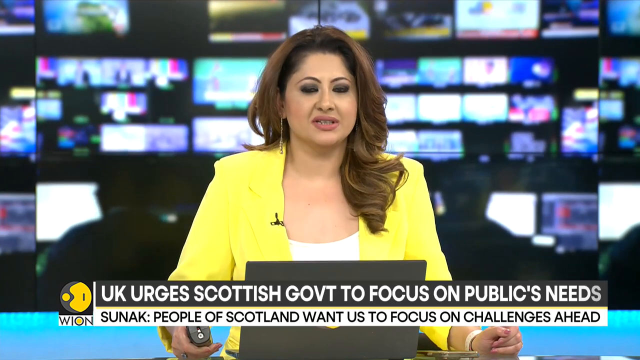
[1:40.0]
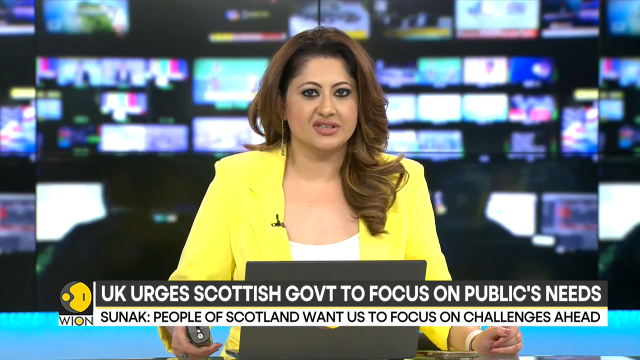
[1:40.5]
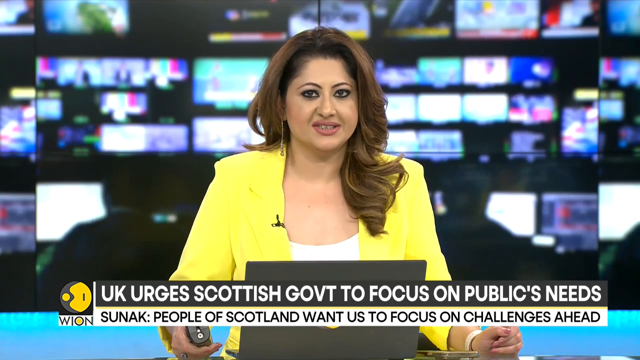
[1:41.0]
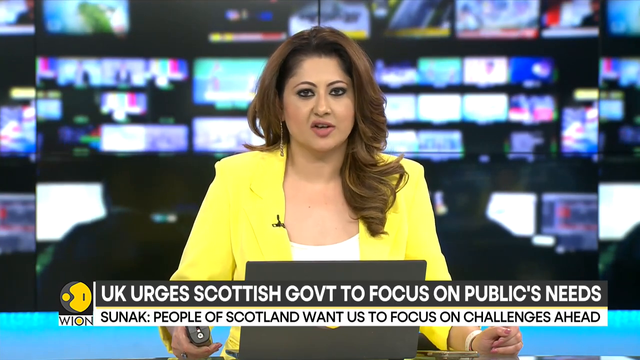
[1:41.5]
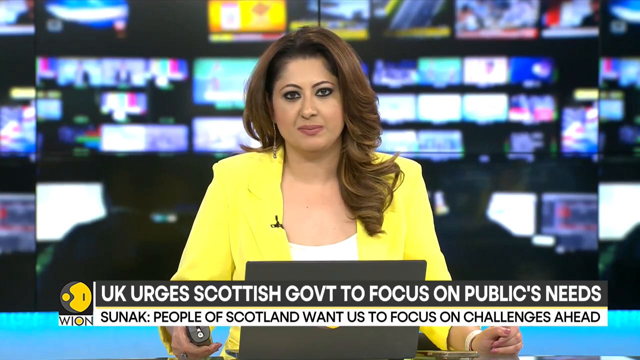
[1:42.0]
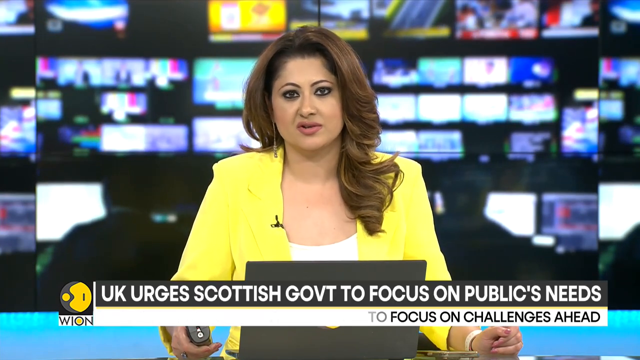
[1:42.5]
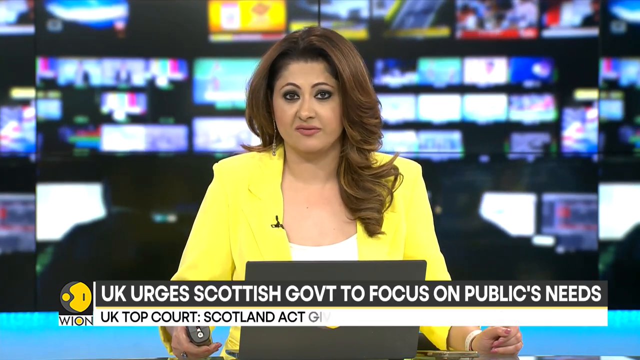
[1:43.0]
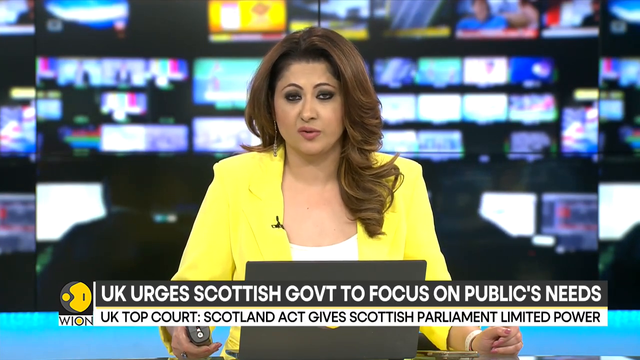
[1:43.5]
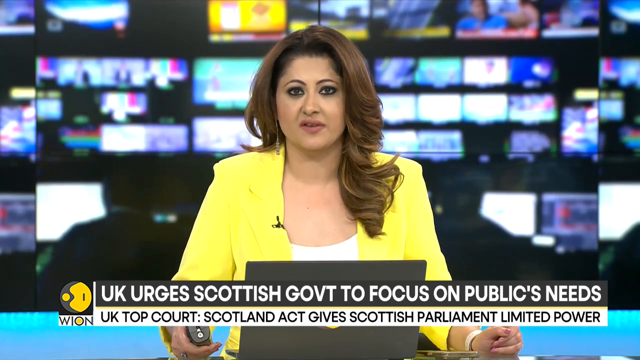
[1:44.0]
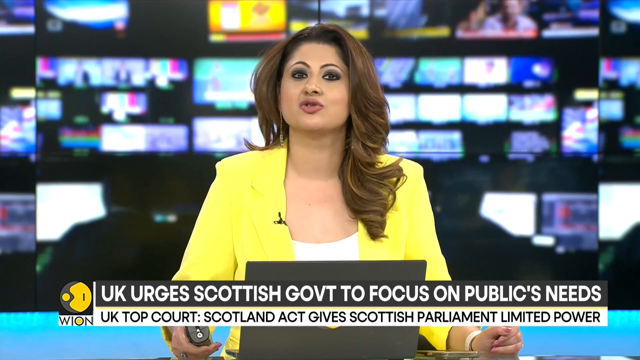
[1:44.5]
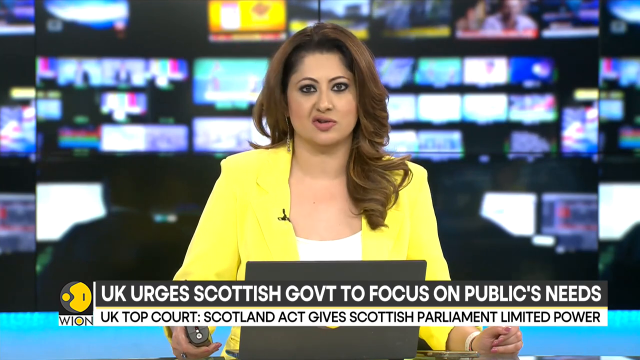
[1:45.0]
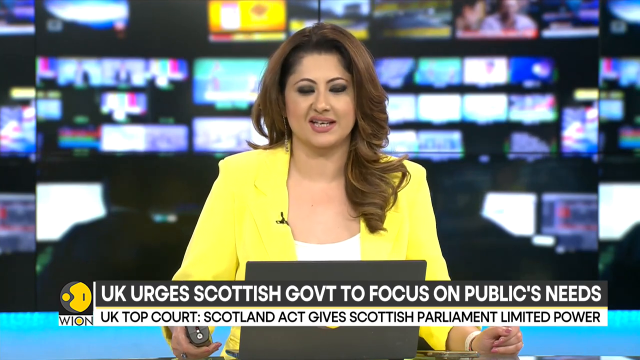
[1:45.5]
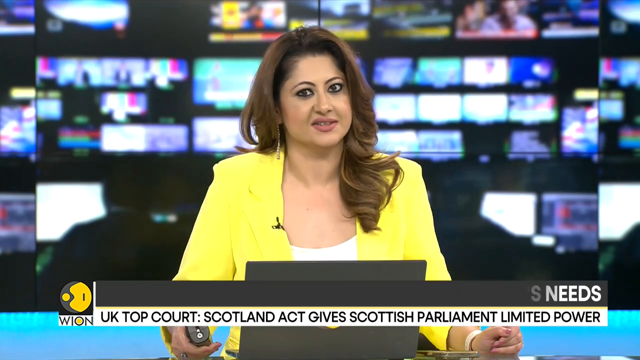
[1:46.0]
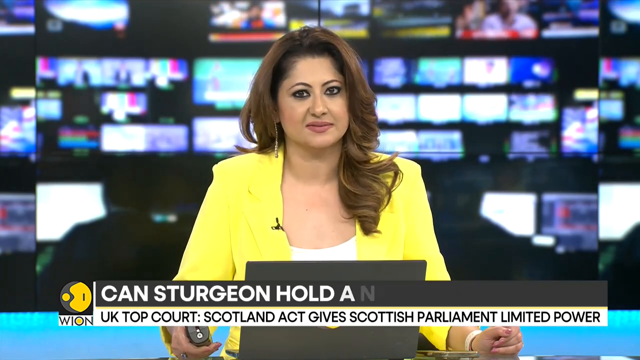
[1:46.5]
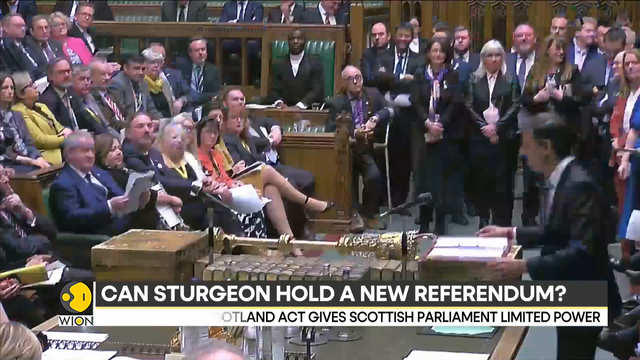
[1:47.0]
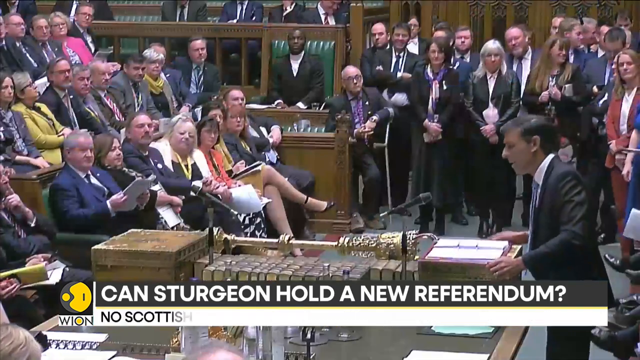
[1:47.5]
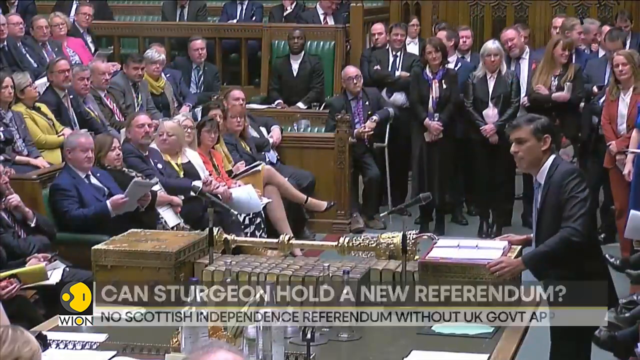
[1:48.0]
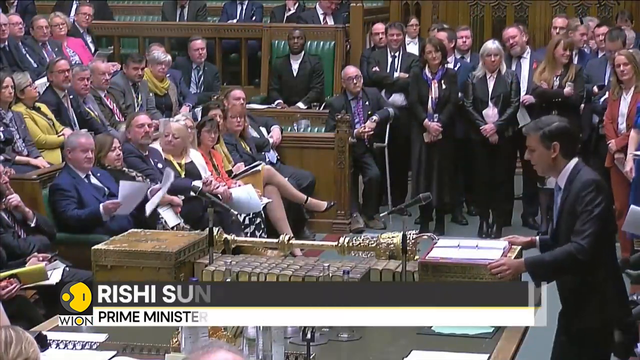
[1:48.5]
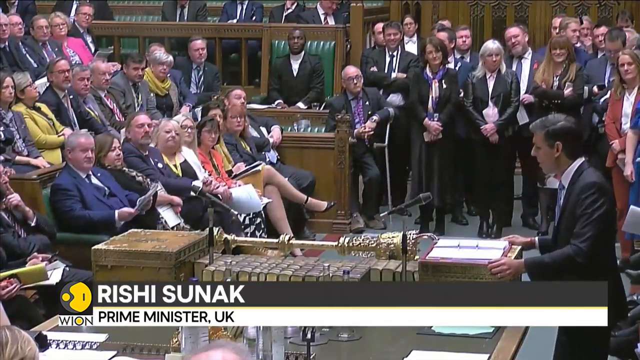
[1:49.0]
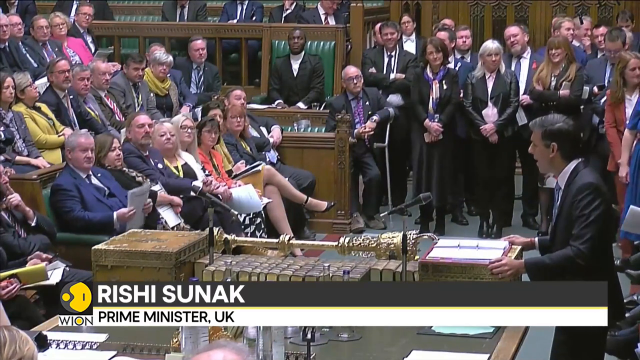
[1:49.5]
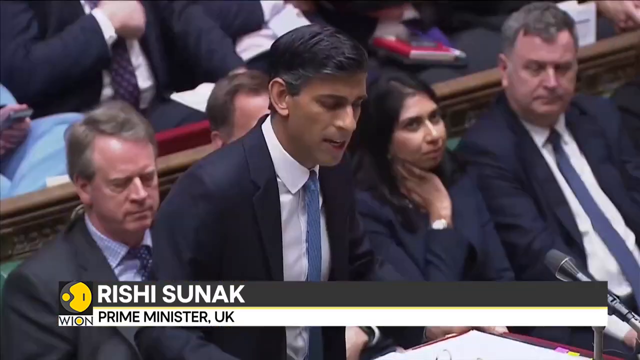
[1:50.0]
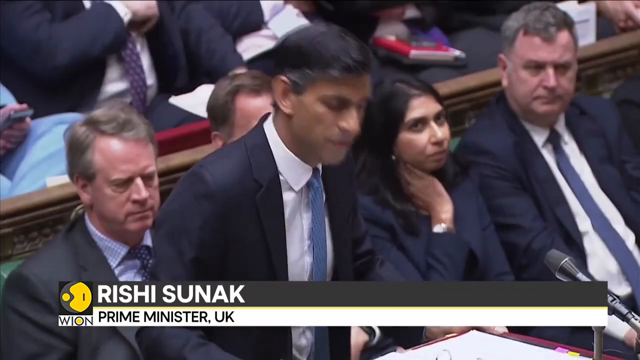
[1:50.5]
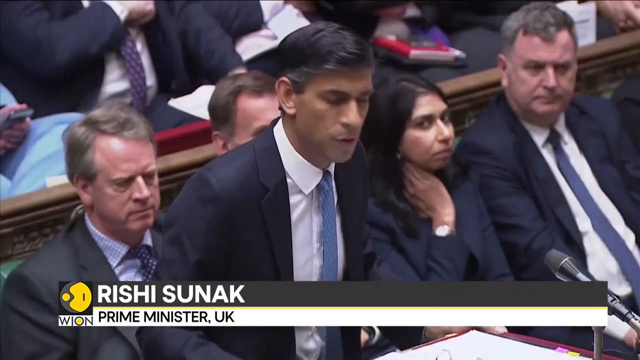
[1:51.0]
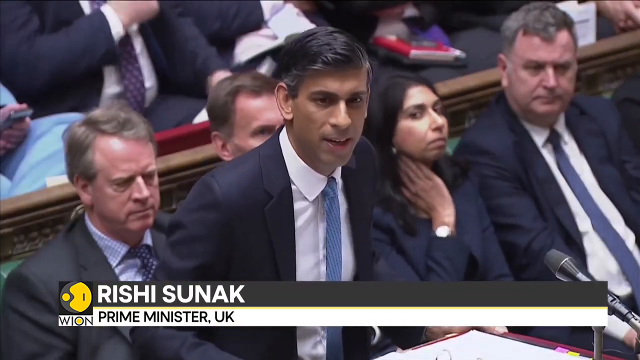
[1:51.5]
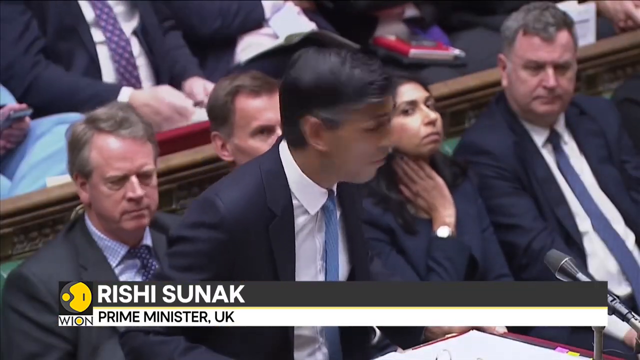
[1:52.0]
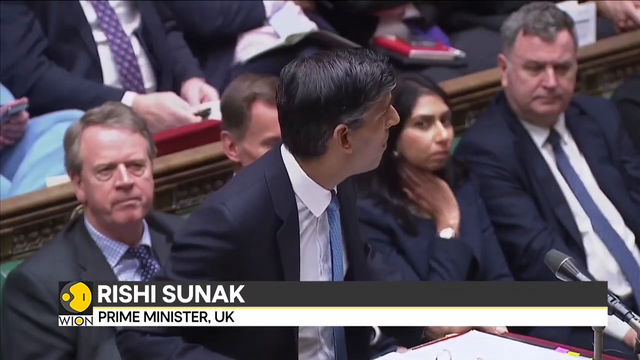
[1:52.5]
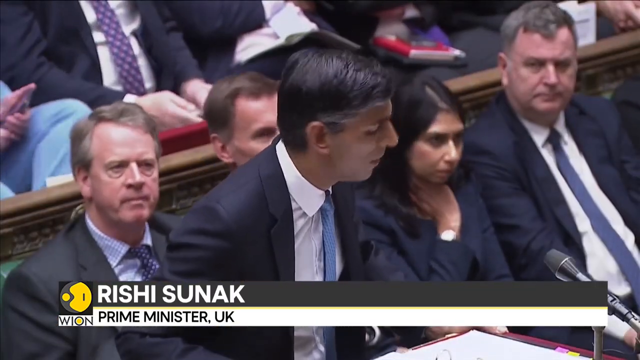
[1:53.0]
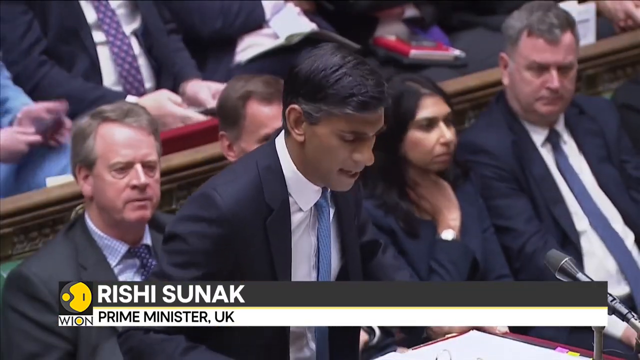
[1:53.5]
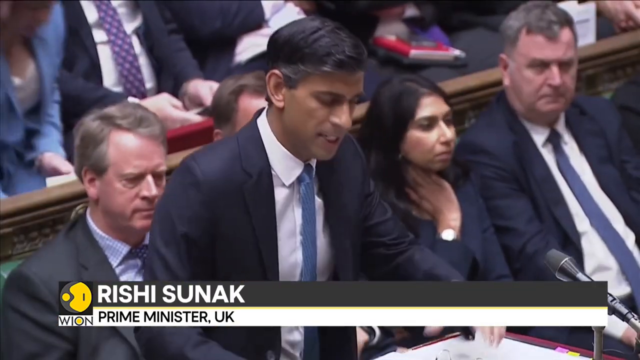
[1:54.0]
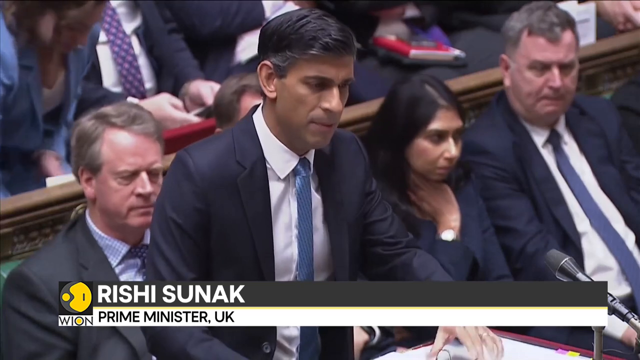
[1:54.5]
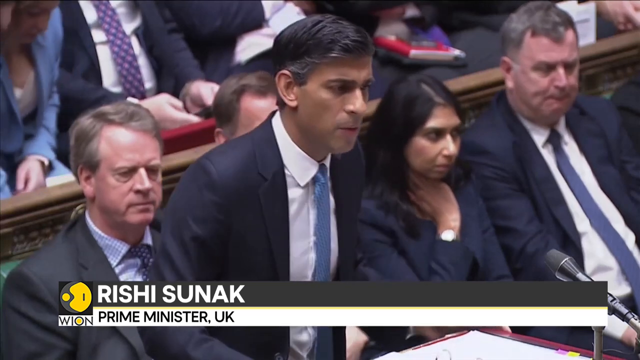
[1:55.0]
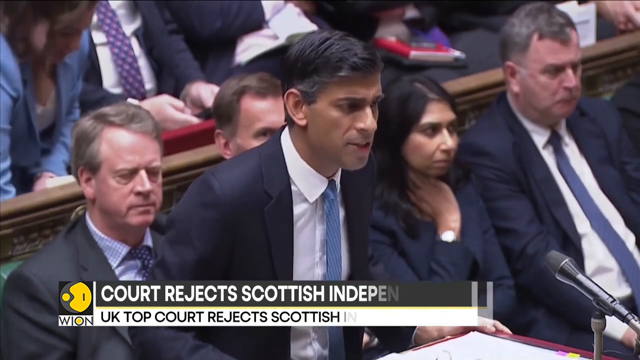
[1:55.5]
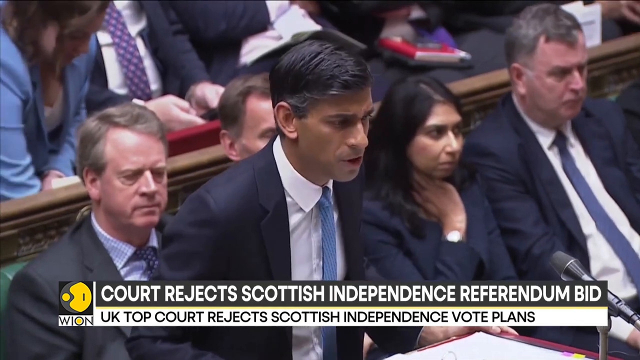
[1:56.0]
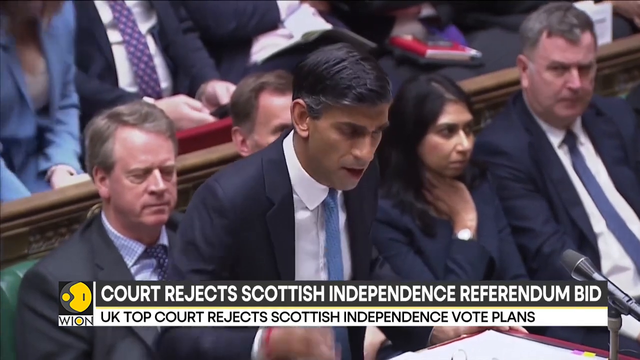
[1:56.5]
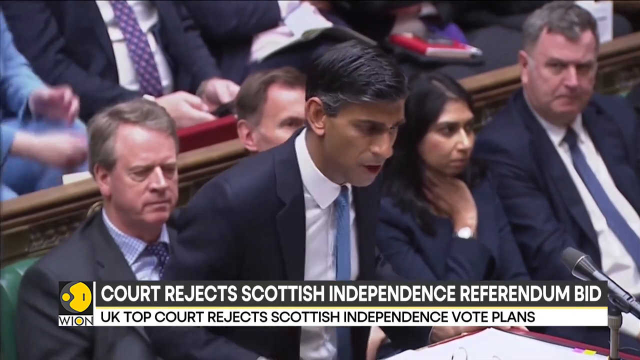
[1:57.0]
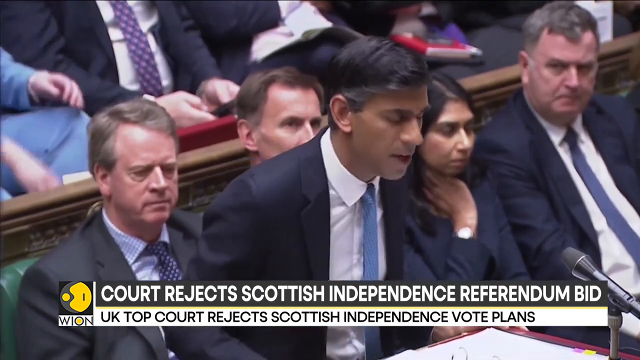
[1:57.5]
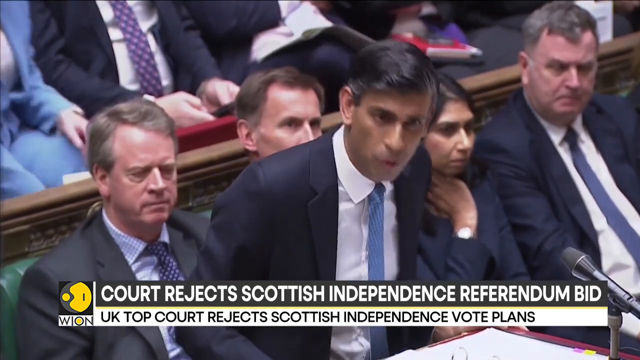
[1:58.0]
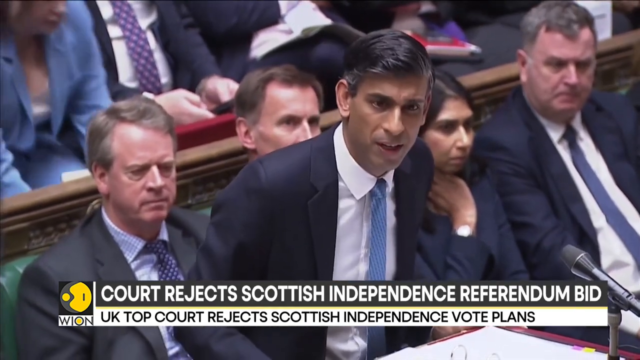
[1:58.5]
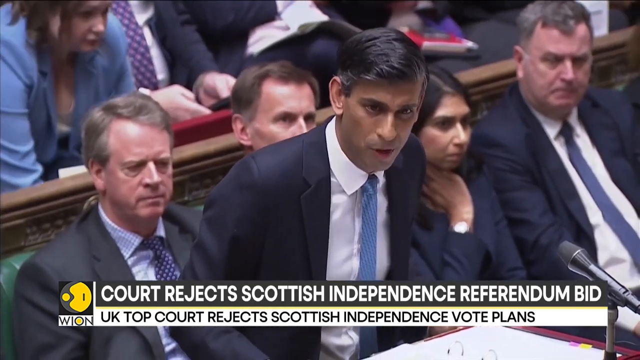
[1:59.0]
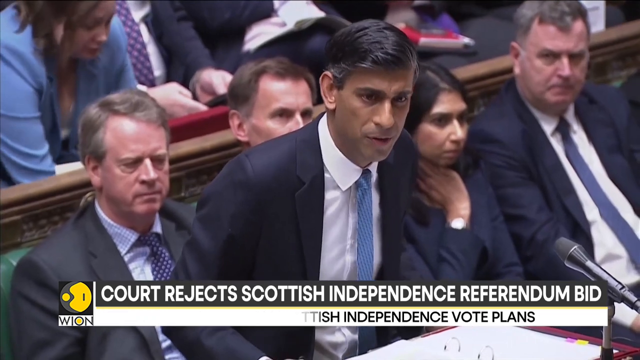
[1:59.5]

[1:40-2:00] A banner reads "Can Sturgeon make a new referendum." The next scene seems to be another parliament, not Scotland's, probably another parliament or courtroom, with people of various ages, ethnicities and appearances. A gold pole connects one of the podiums, with a bunch of books under it. Another man comes into the picture: Rishi Sunak, the Prime Minister of the UK. He is apparently a South Asian man in his 40s, with rounded ears and light brown skin, wearing a dark blue blazer, a white shirt and a patterned tie. He seems very impassioned as he talks, his eyebrows furrowed as if he is speaking angrily about the topic. He is maybe the one strongly against the referendum.